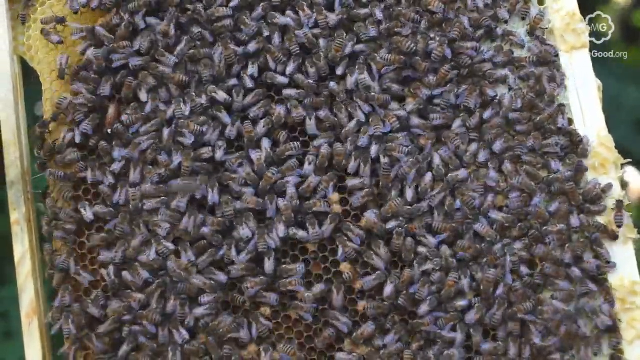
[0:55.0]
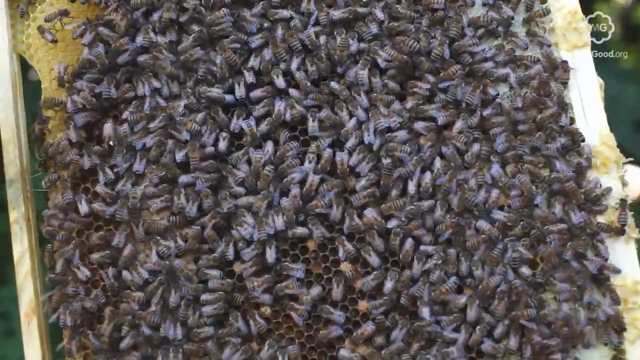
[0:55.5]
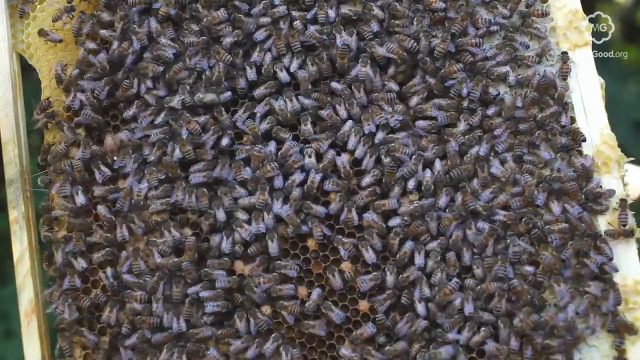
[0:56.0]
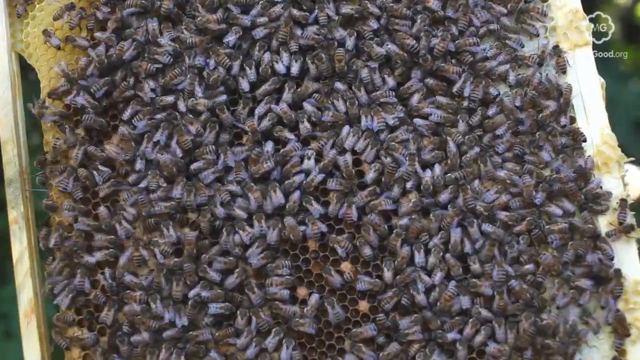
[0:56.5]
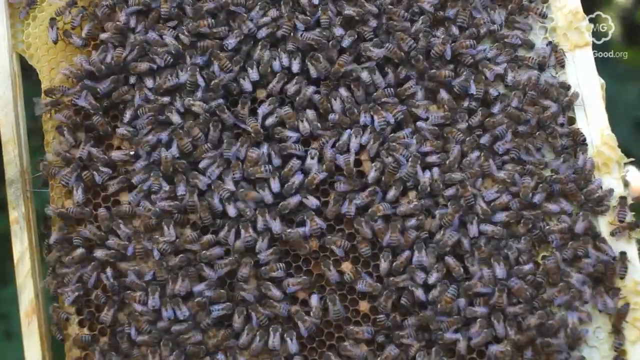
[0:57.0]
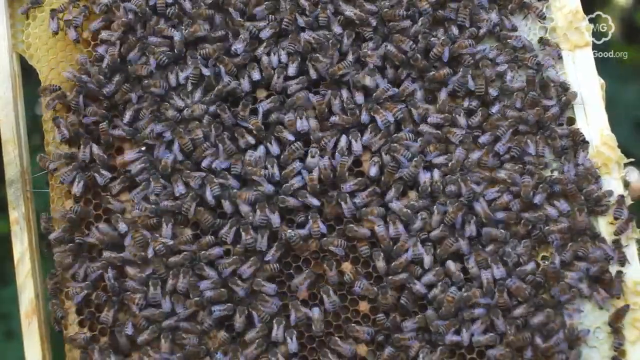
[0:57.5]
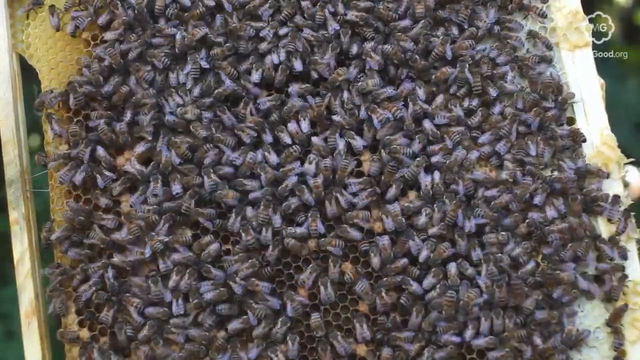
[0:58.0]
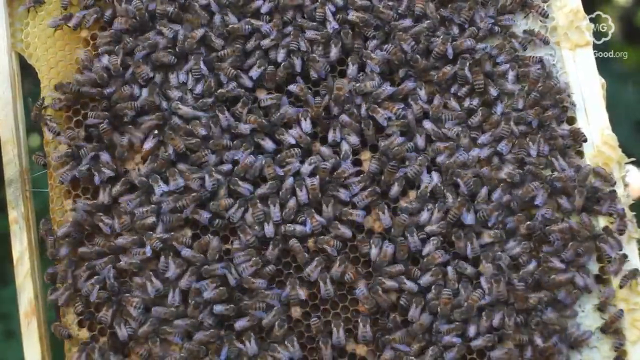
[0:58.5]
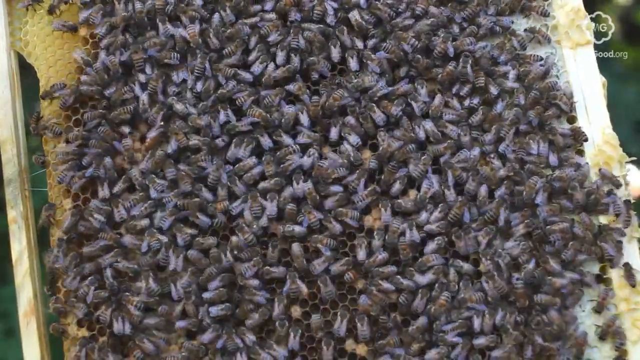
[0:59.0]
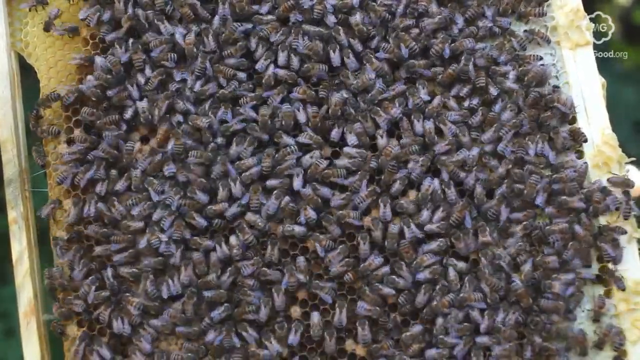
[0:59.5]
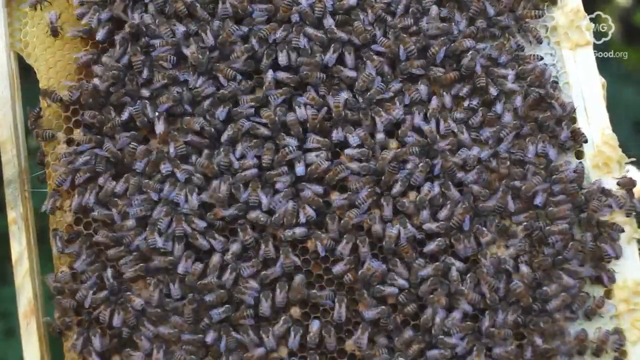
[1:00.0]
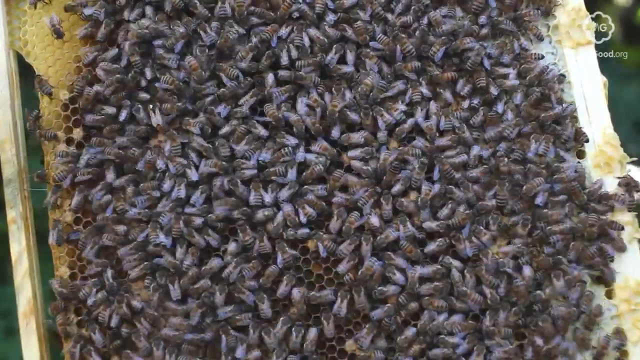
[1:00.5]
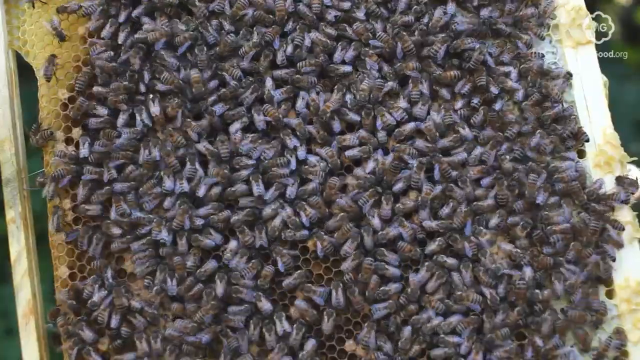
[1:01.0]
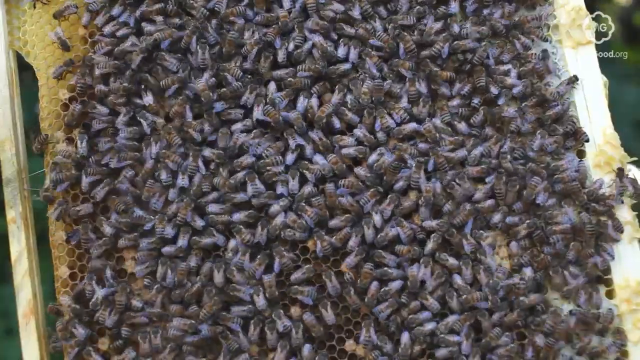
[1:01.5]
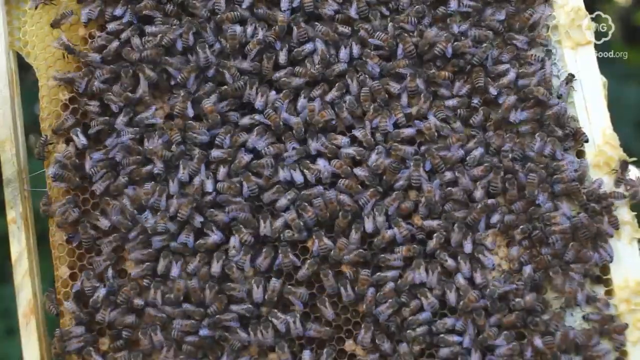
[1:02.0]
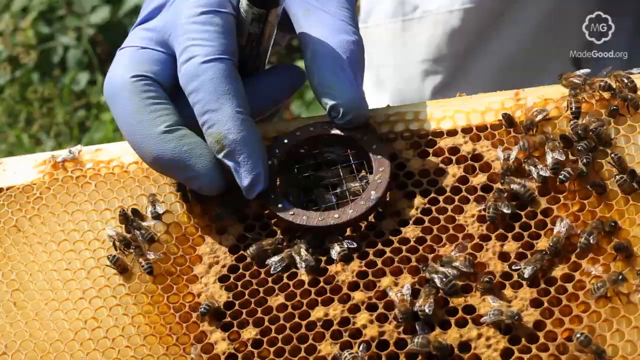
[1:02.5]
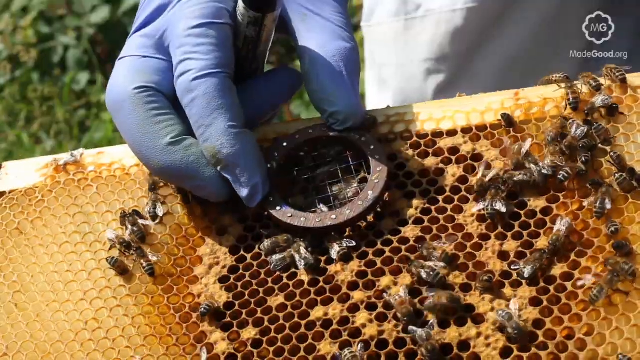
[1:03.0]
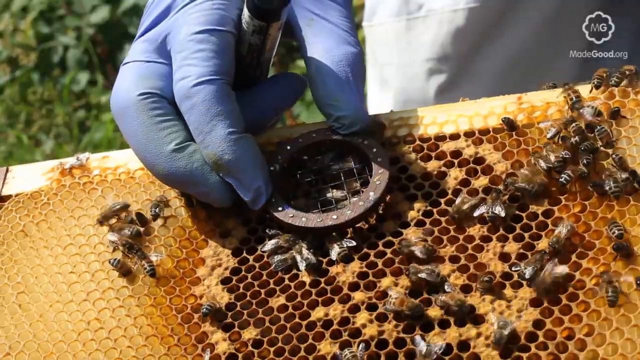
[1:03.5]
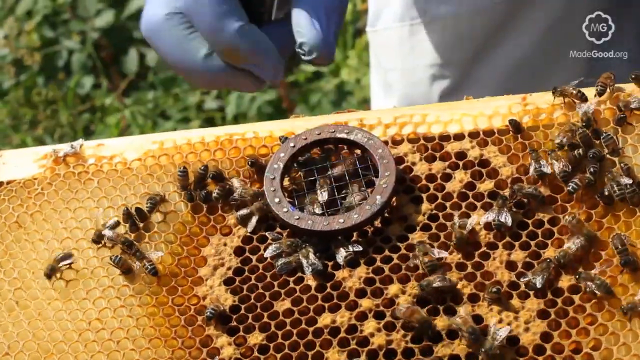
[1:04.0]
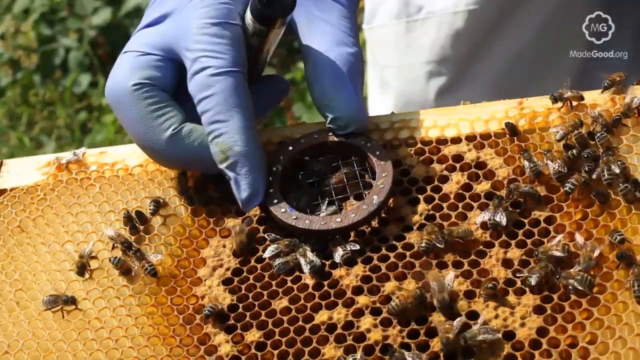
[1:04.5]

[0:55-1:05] Many bees swarm and kind of crawl around the center of a device that has a lot of circles in the center. They all have black backs, look similarly sized, and are kind of crawling or moving toward something. A person wearing a purple glove appears to push down on a circle, maybe to trap the bees or to capture something they produce, like honey. This is on a circular area that kind of looks like a honeycomb, with a wooden side and some green in the background, so it is outdoors. The person adjusts the circular object, which is not very large and is black.